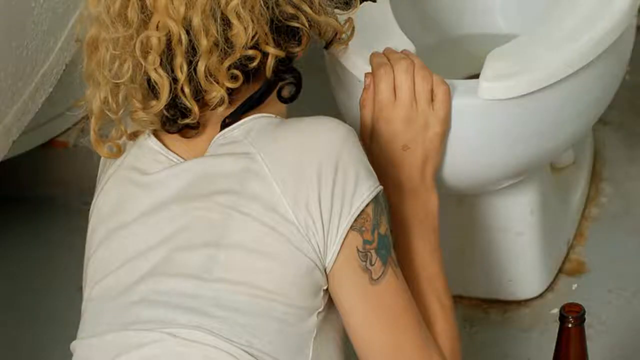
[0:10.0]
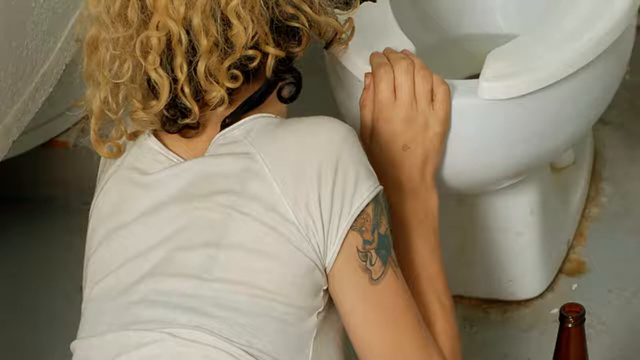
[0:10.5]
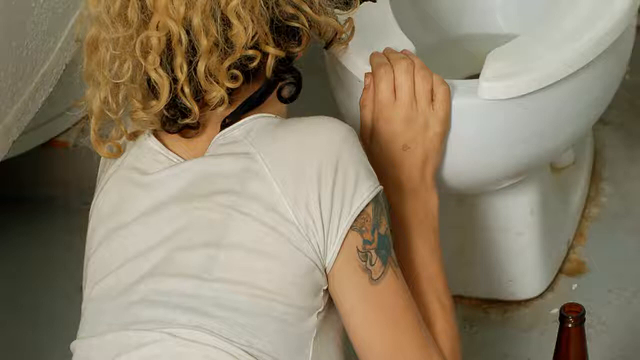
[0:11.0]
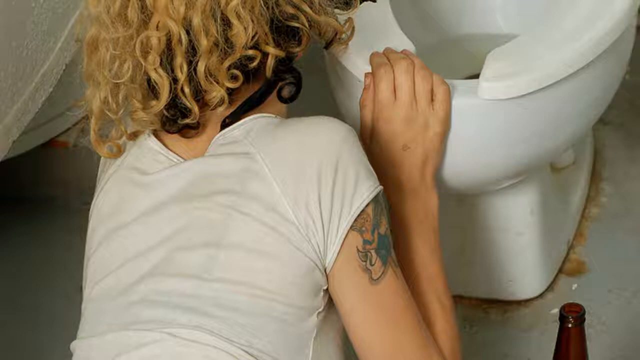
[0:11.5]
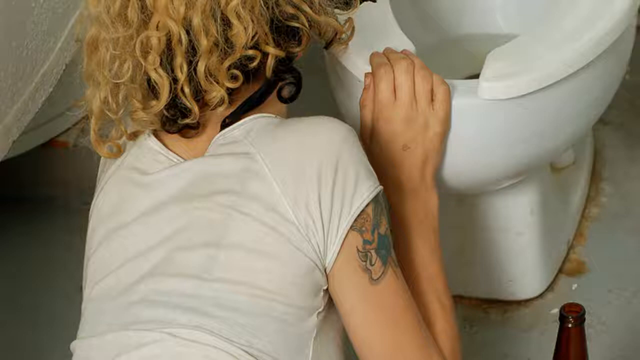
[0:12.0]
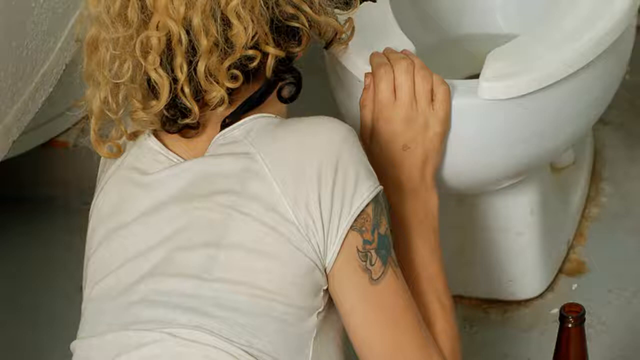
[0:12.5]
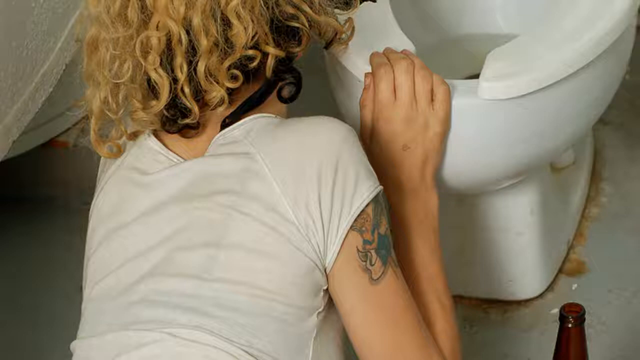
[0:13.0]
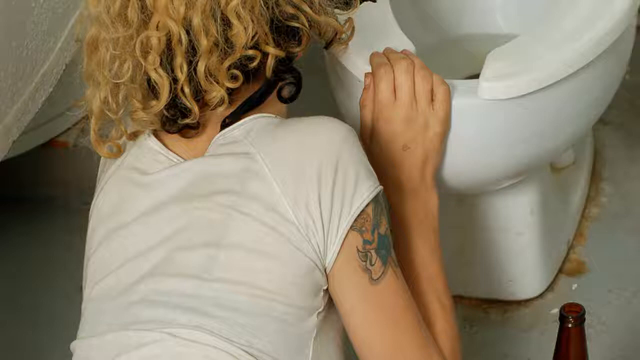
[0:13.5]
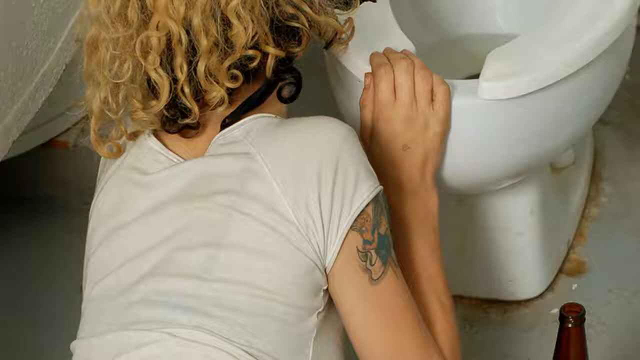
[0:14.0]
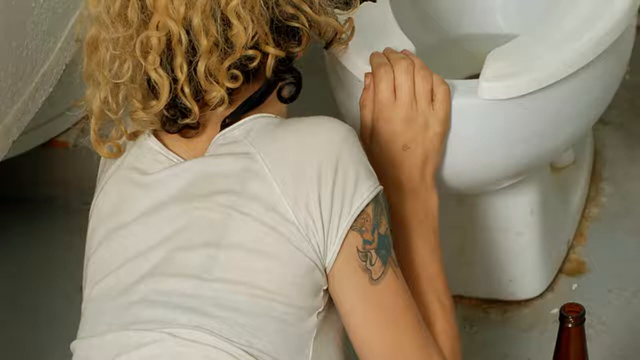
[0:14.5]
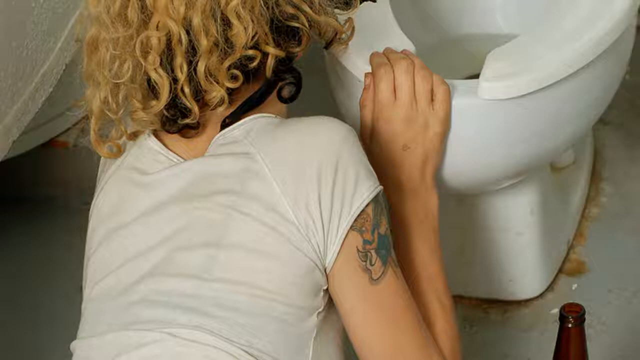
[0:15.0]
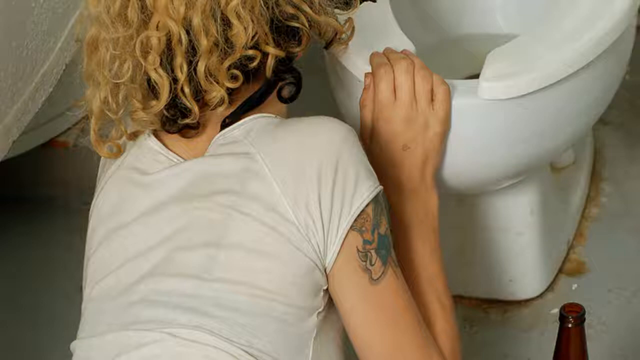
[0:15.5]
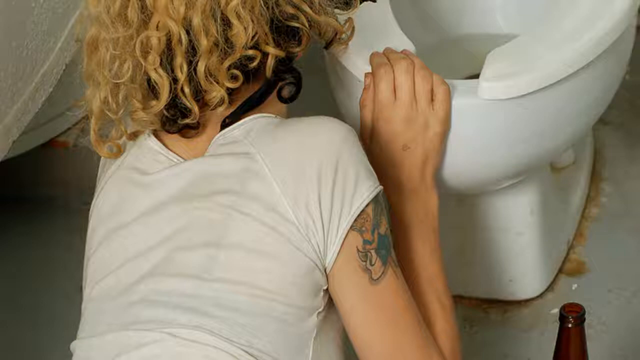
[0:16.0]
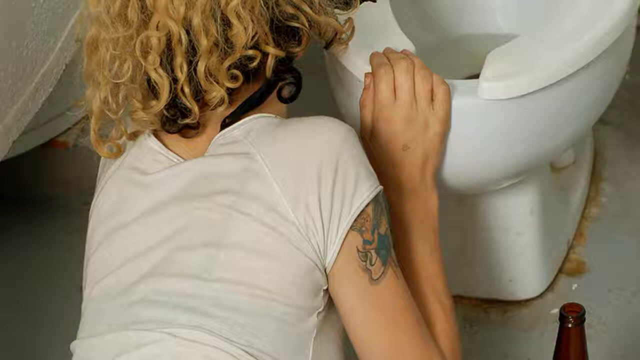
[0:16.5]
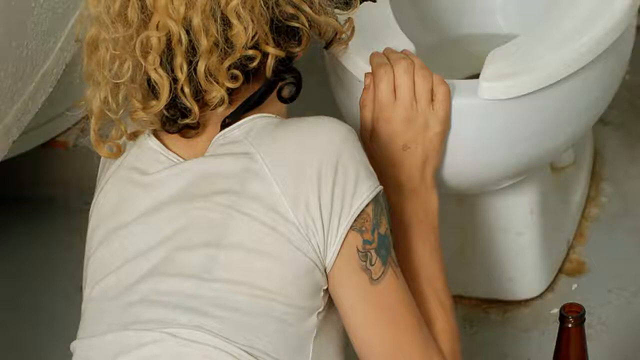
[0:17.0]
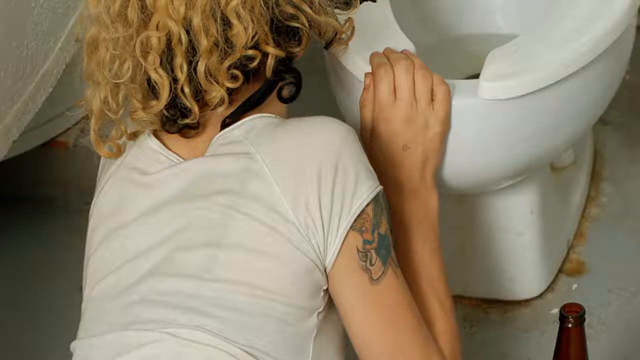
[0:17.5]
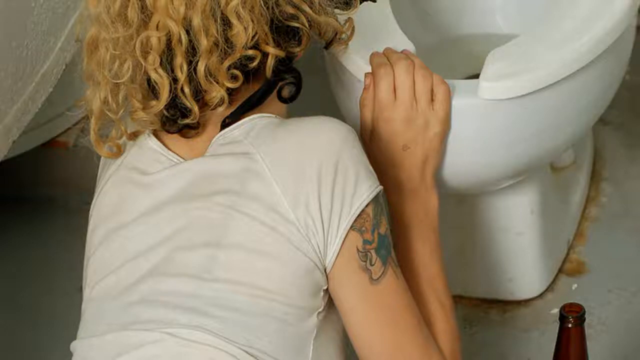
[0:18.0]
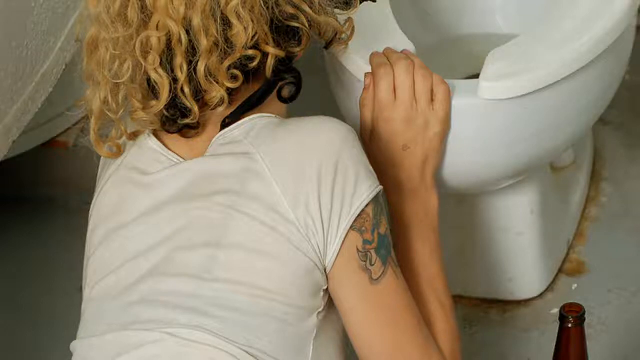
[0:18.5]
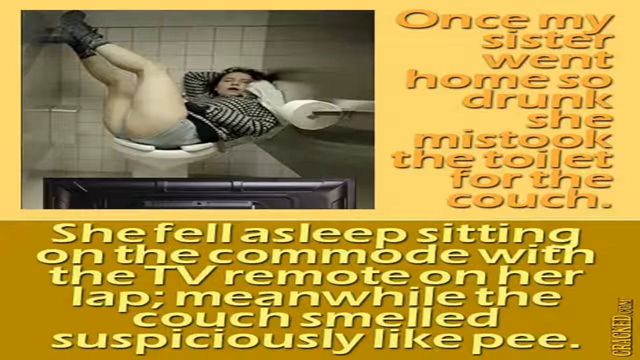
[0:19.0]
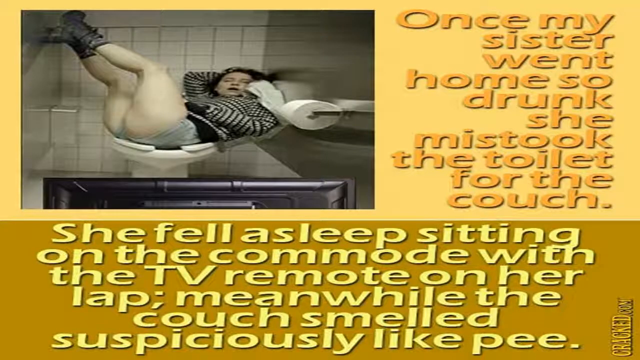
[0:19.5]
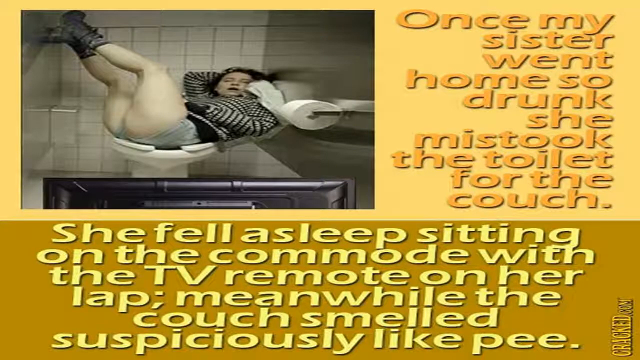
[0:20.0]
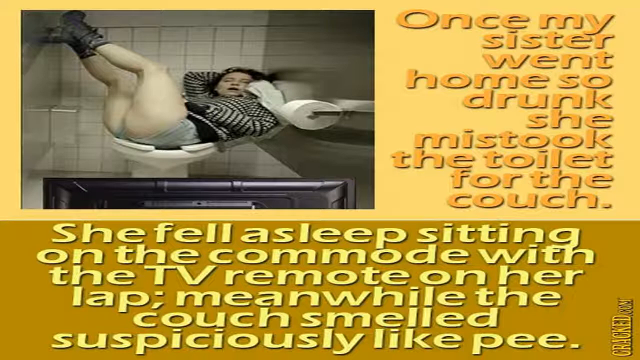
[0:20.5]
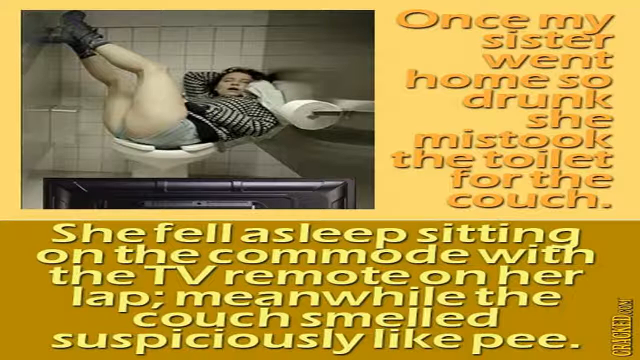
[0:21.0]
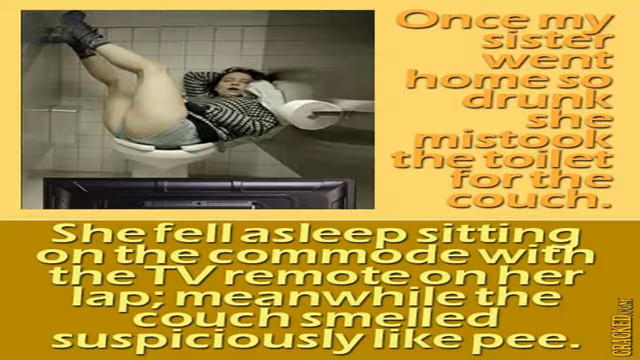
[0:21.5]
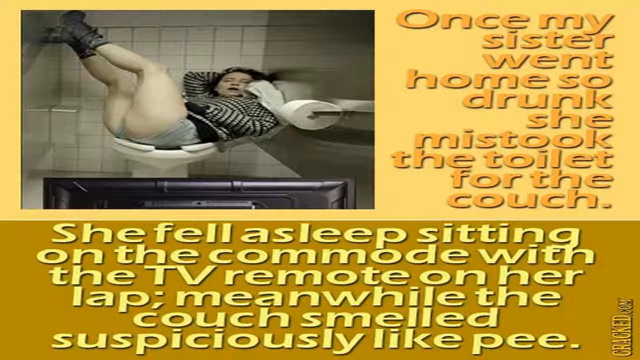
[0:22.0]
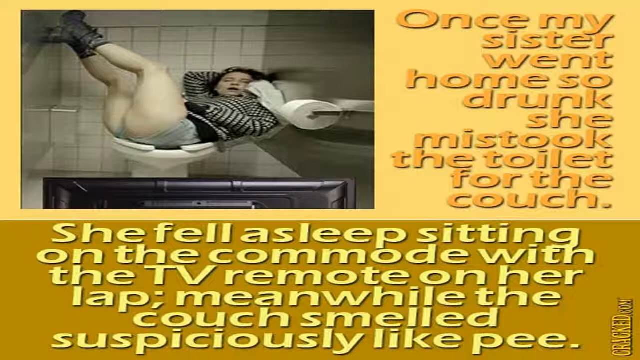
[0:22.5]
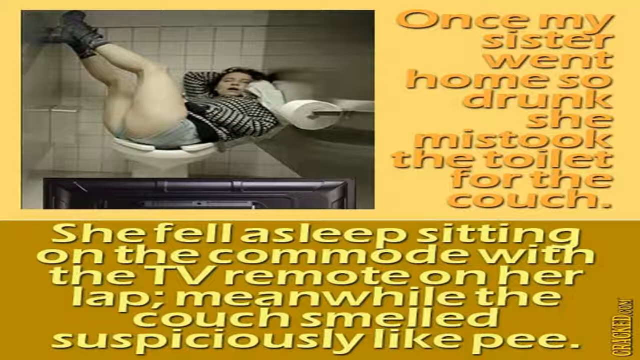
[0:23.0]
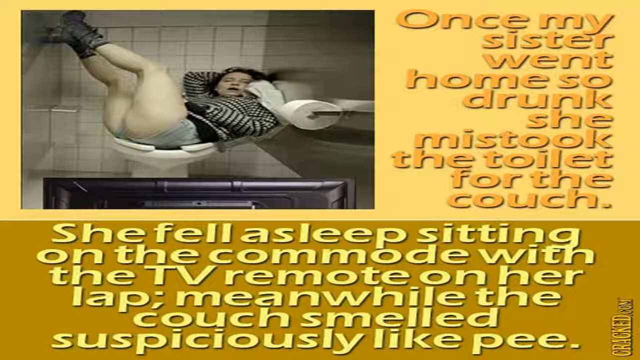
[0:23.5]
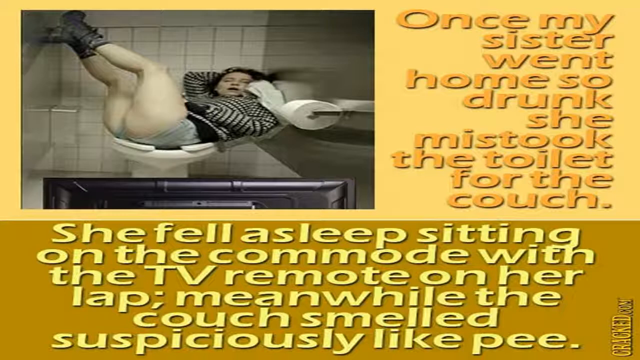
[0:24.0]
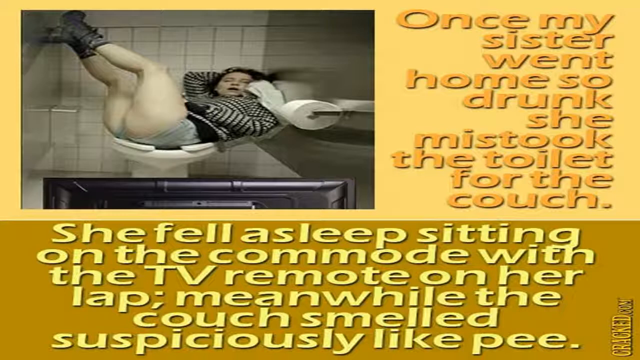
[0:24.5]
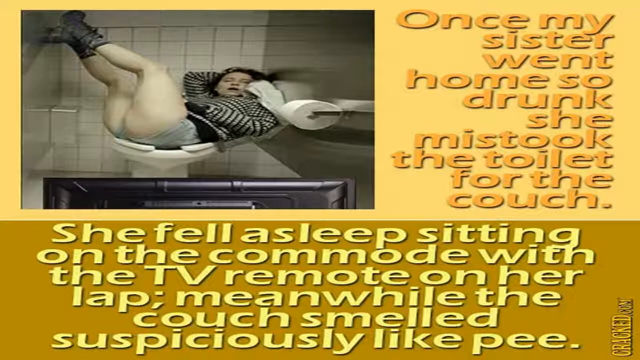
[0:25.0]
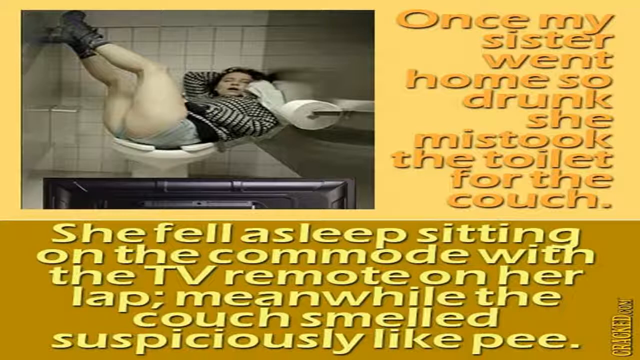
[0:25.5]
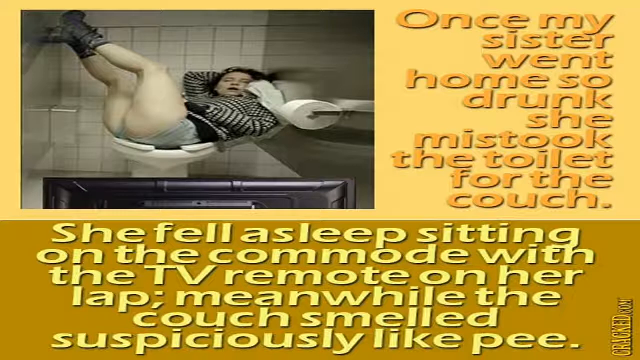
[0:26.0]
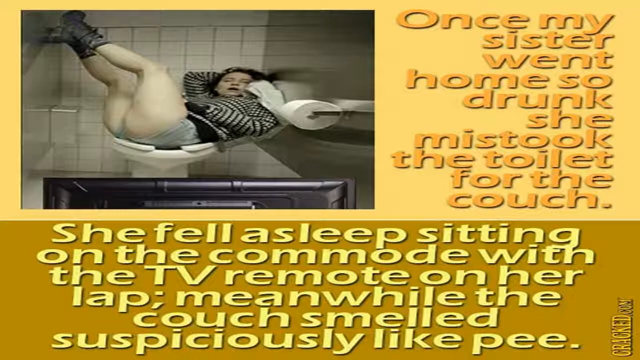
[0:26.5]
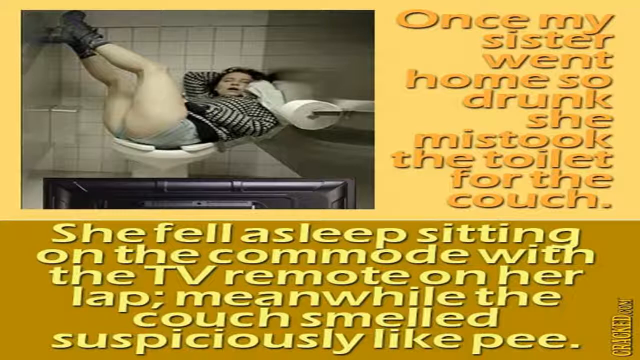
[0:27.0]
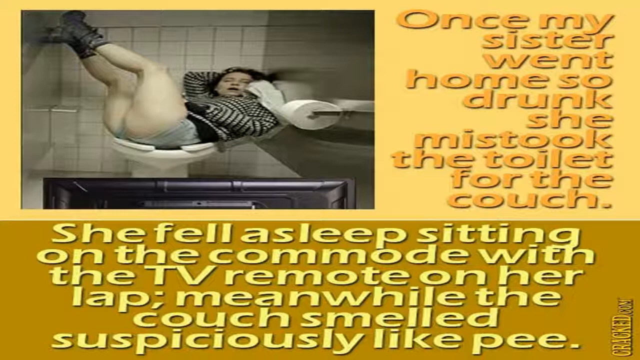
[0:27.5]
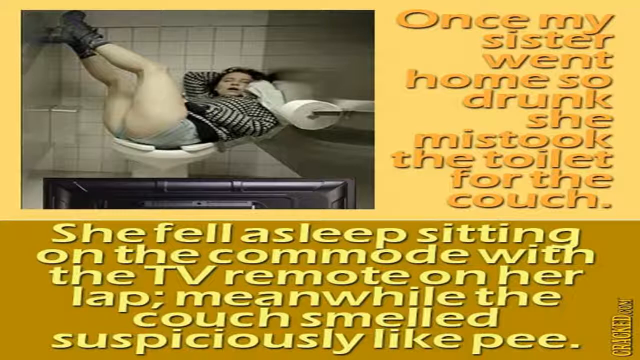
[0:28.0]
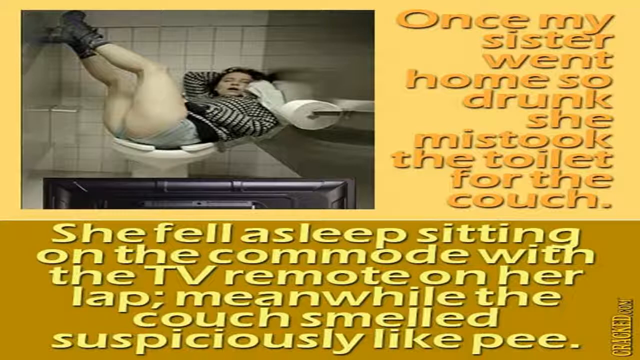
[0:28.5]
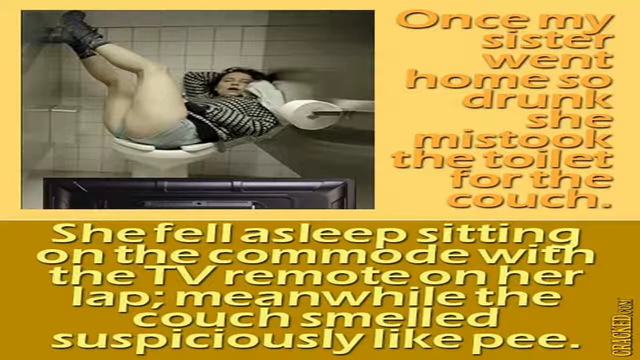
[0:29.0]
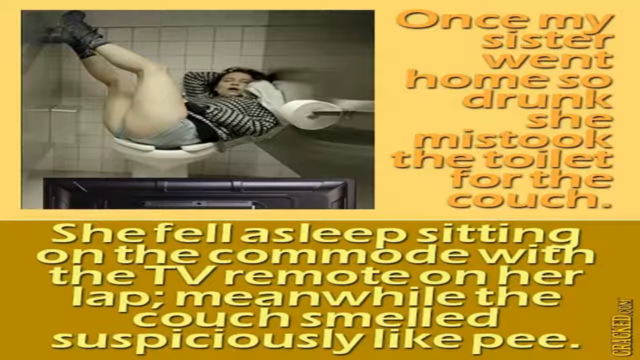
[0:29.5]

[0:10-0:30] The woman is hanging on to the toilet with her right hand. The video then transitions to a picture of a woman sitting on a toilet with her legs up. On her left side is a roll of white toilet paper. She wears black boots, blue jean shorts, and a white and black shirt. In front of her is the backside of the top of a black TV. On the right, text reads "Once my sister went home so drunk she mistook the toilet for the couch." Underneath, more text reads "She fell asleep sitting on the commode with the TV remote on her lap. Meanwhile the couch smelled suspiciously like pee." All of the words on the screen are in different shades of orange and yellow. The video is in a rectangular shape.